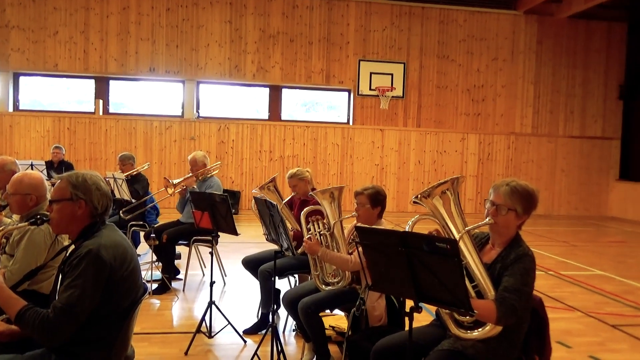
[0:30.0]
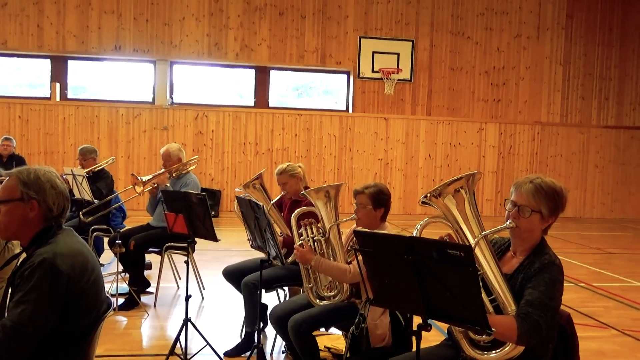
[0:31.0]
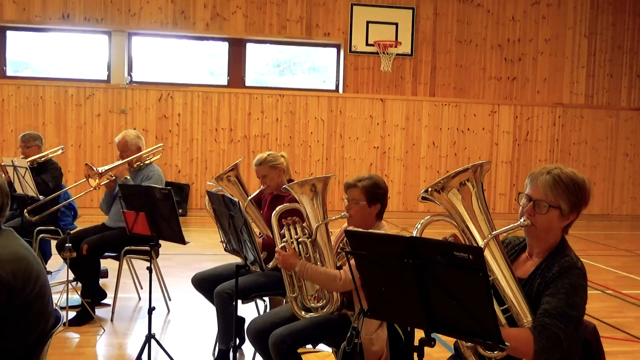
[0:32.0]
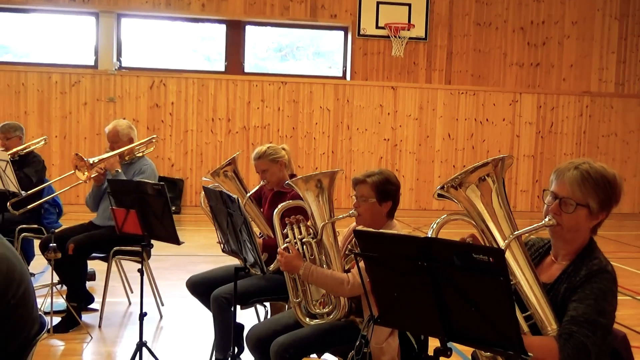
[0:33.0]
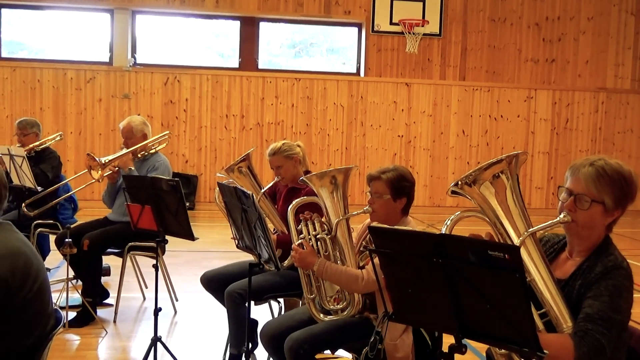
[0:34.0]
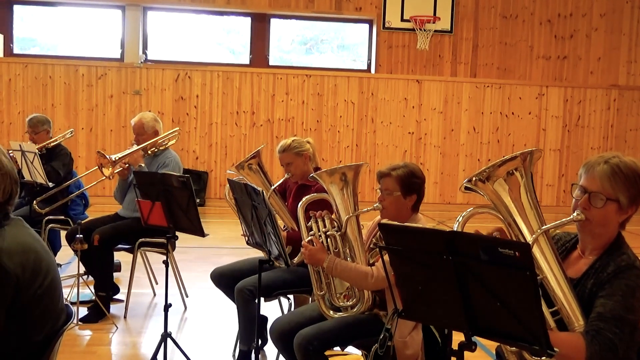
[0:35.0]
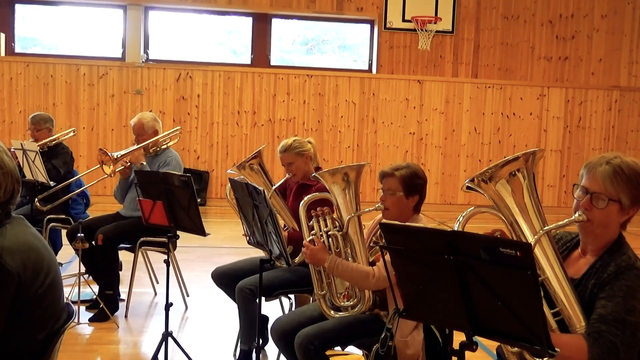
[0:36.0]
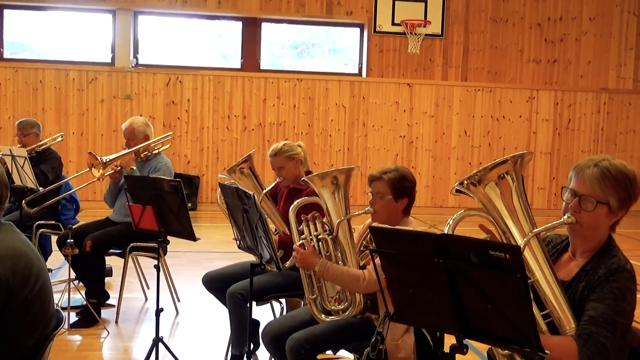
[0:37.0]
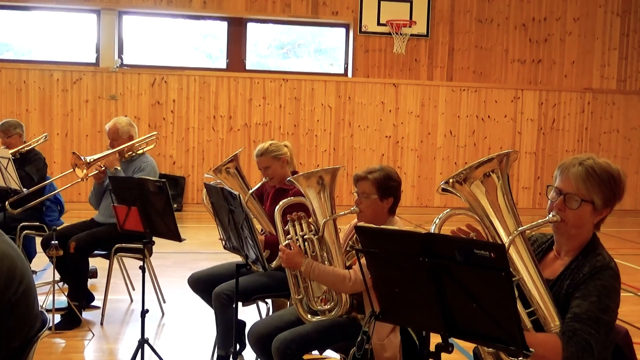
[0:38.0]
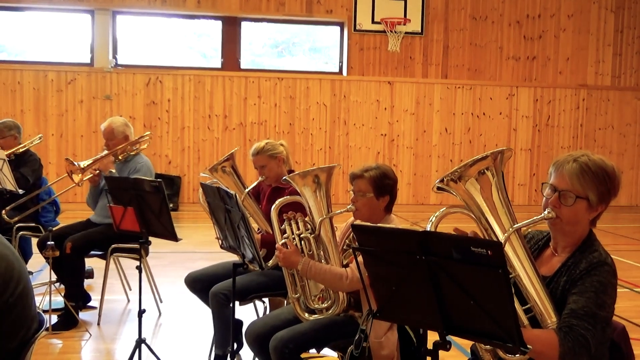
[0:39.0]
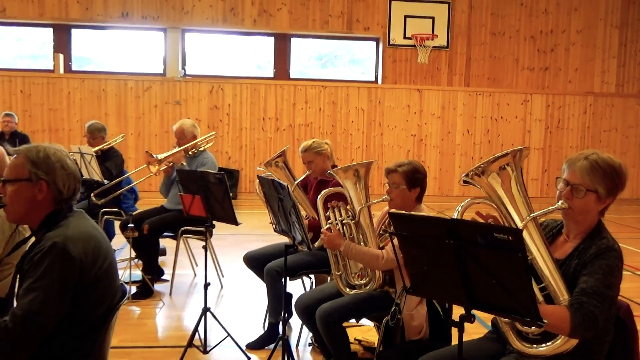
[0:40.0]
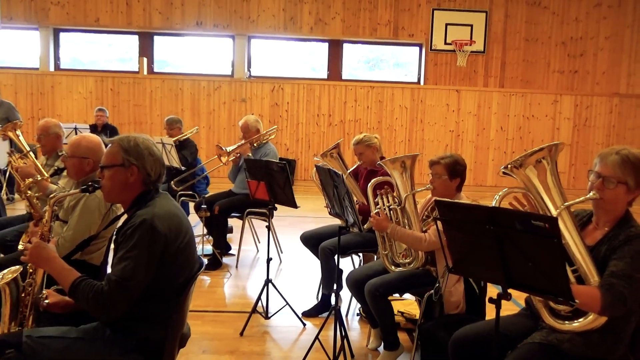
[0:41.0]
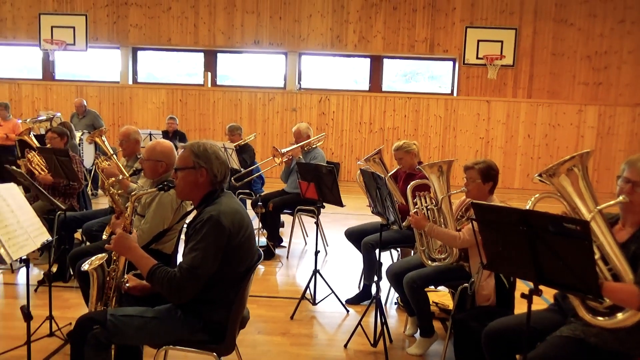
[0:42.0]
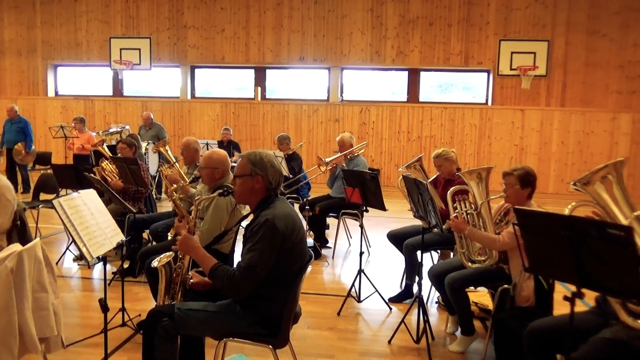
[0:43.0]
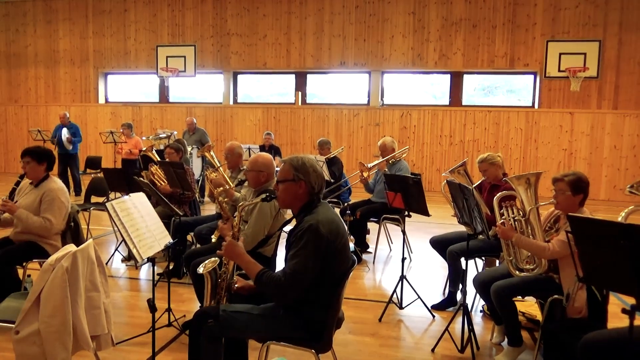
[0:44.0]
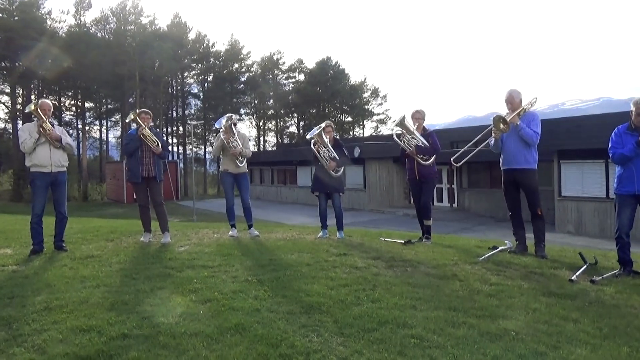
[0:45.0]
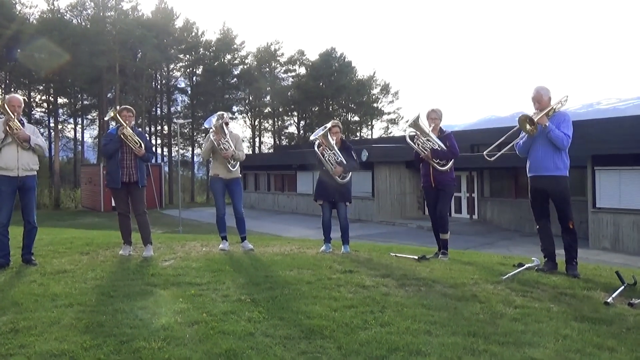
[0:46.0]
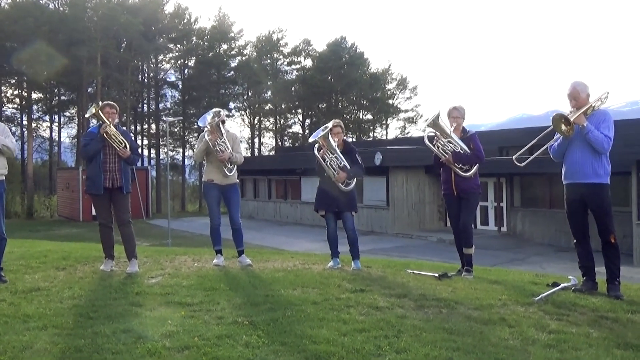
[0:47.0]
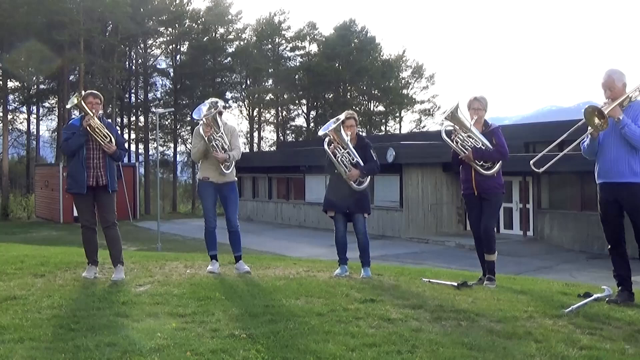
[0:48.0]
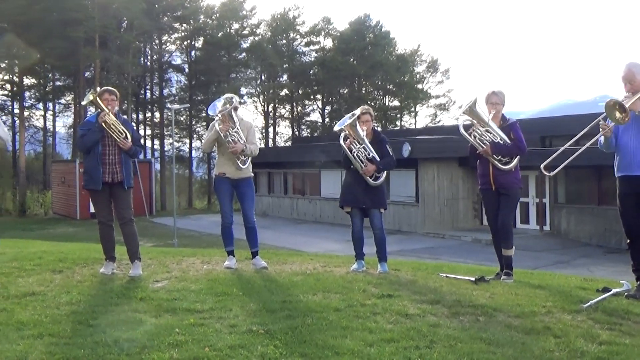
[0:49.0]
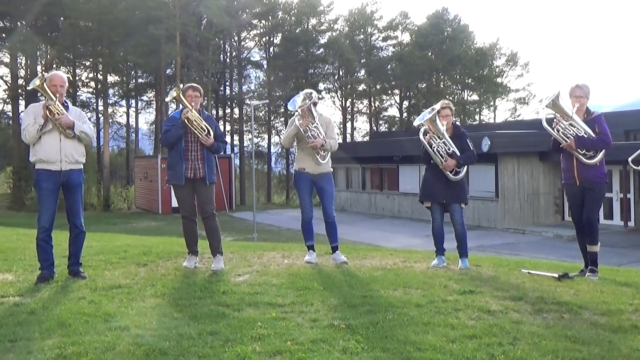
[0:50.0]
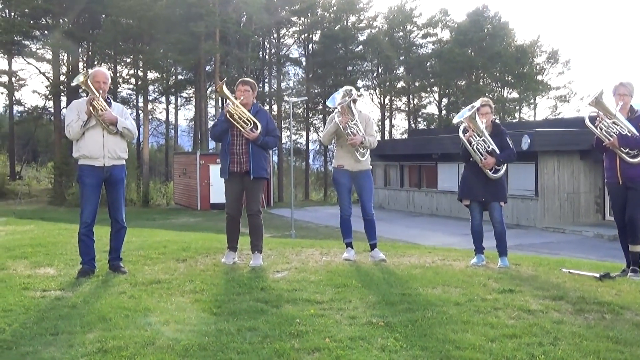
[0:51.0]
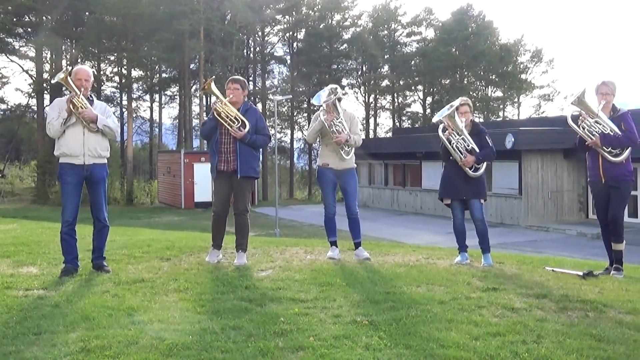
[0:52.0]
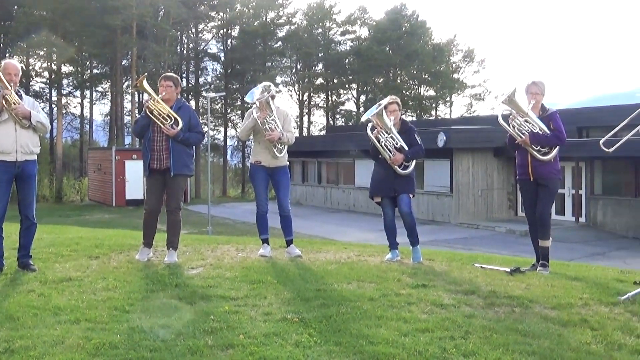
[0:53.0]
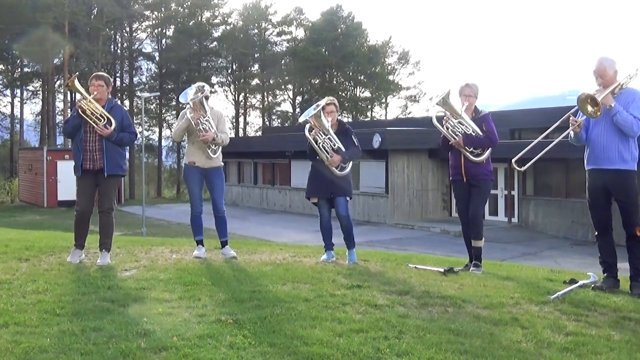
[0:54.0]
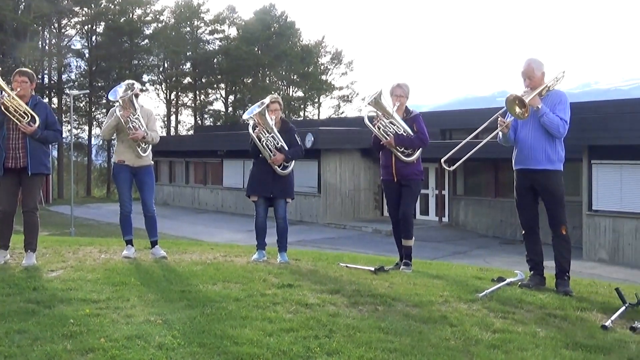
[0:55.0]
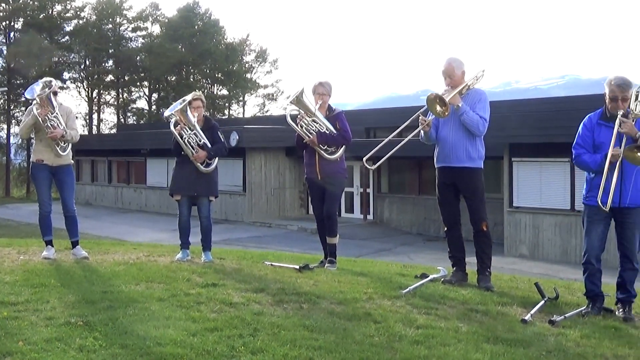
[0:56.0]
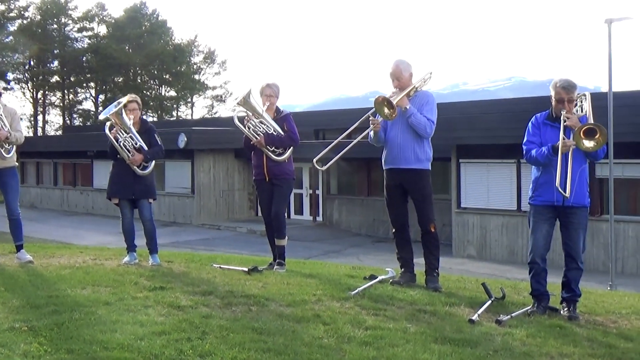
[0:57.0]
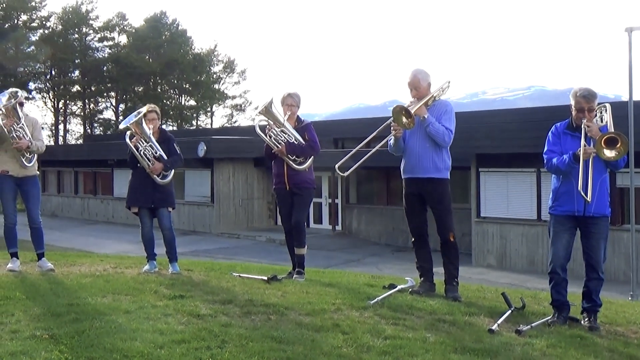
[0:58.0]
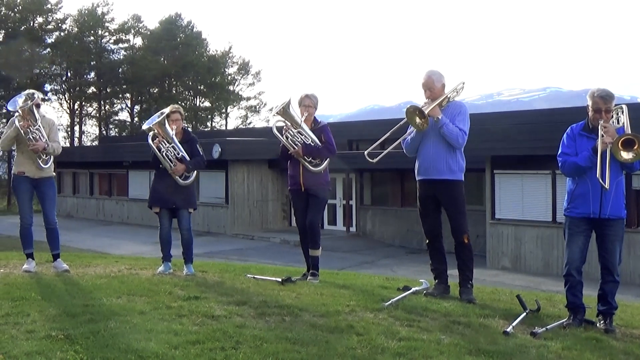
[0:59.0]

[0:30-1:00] In a basketball court room, a basketball hoop is on the back wall and all the walls are covered in brown wood paneling. An orchestra is in the foreground; the back group has many people, all playing large brass instruments. The video zooms in slightly, then shakes a little and zooms out as the band members play. The video cuts to a row of people standing outside on the grass, all playing brass instruments. The video pans left and right as they continue to play. They stand in front of a gray concrete structure, and mountaintops poke up in the back. Their fingers move as they press the buttons on the instruments, and they take slight inhales and then blow into their instruments.